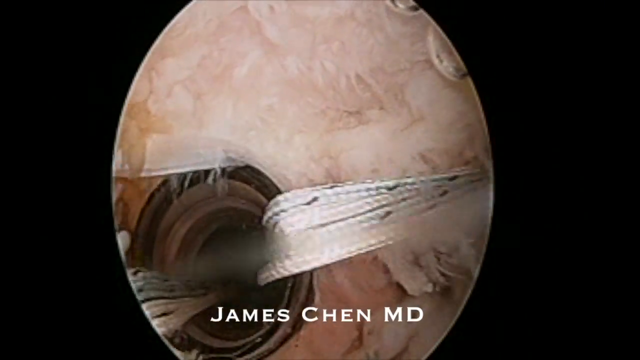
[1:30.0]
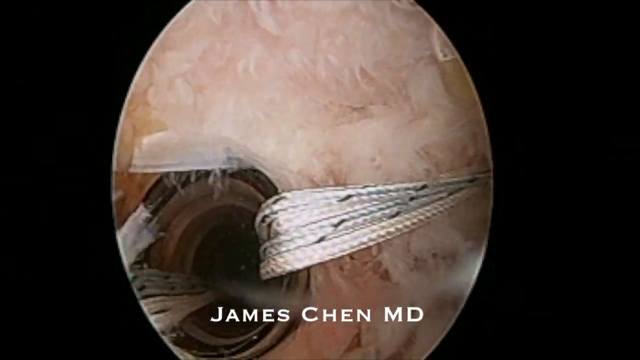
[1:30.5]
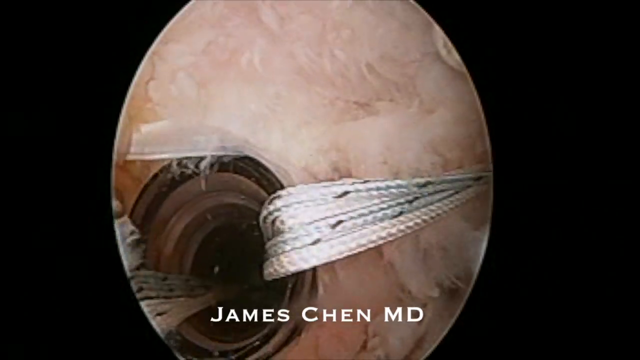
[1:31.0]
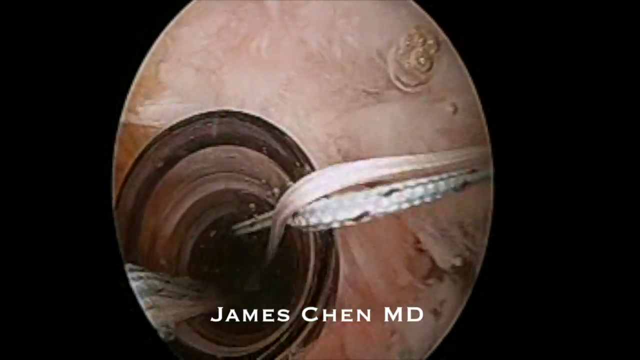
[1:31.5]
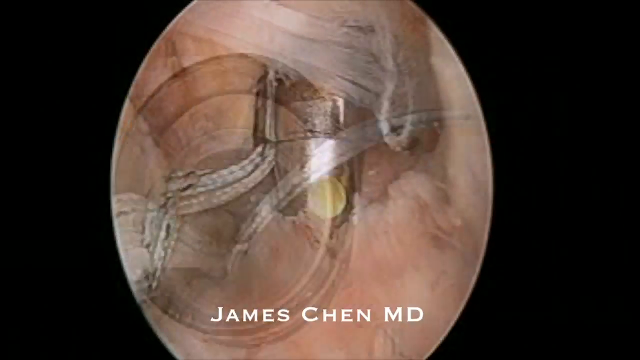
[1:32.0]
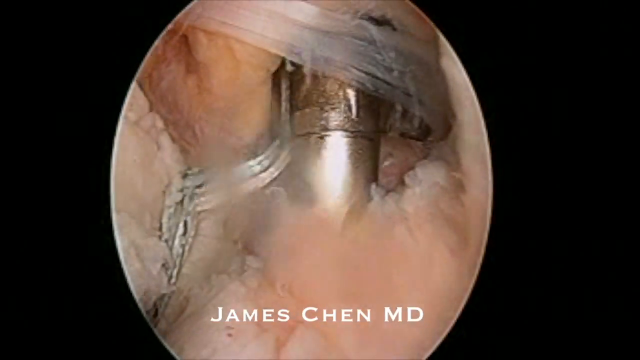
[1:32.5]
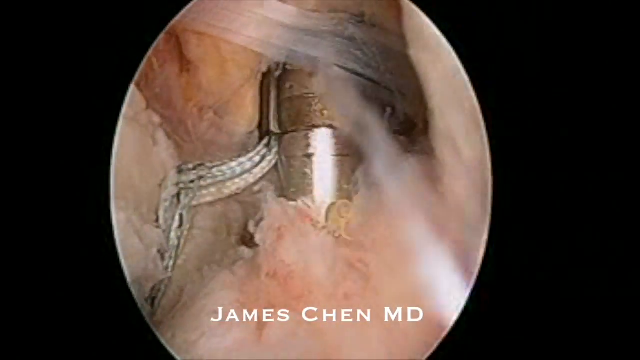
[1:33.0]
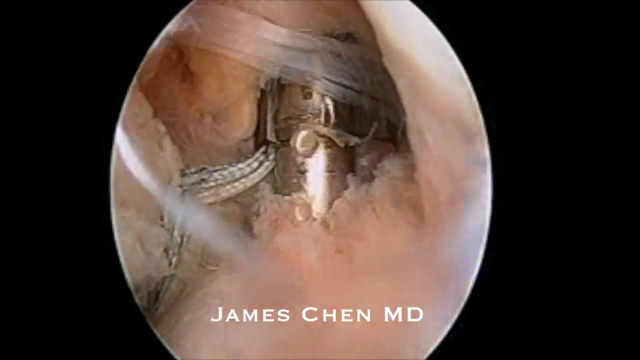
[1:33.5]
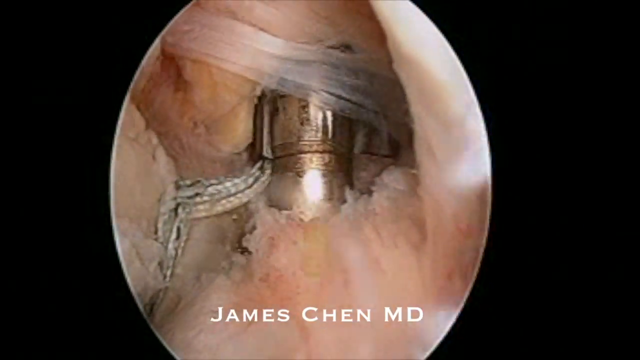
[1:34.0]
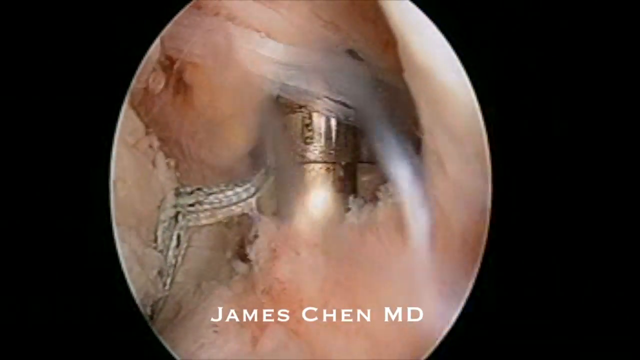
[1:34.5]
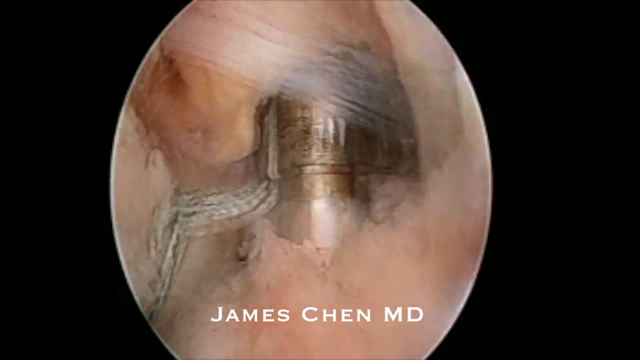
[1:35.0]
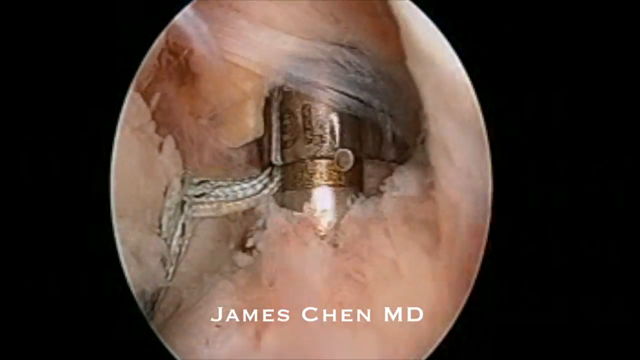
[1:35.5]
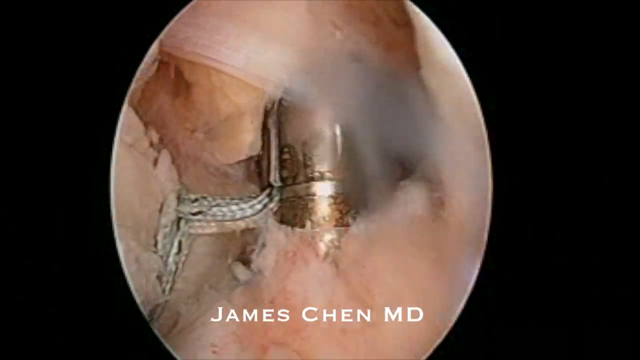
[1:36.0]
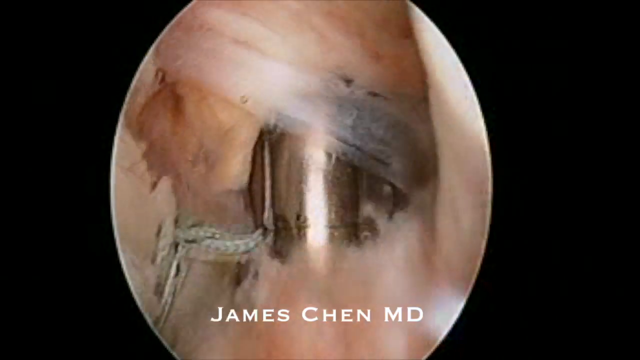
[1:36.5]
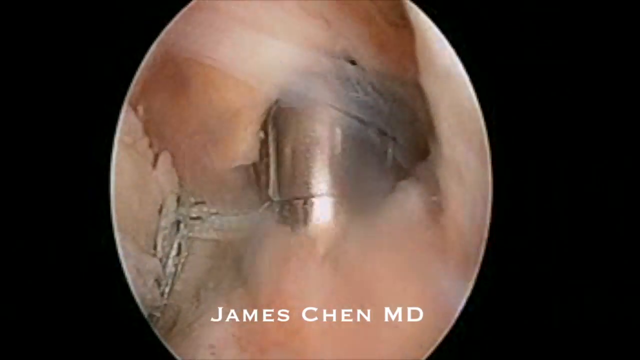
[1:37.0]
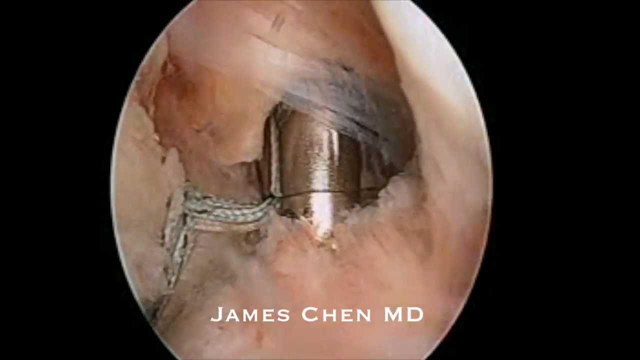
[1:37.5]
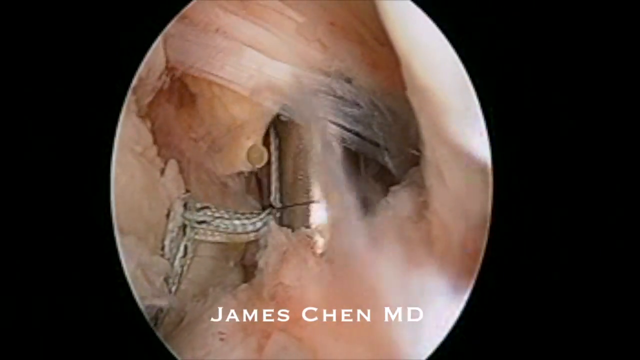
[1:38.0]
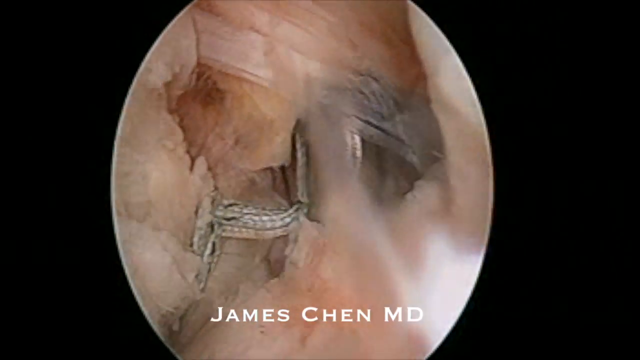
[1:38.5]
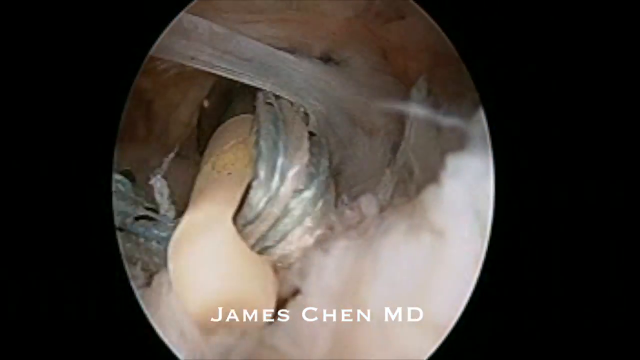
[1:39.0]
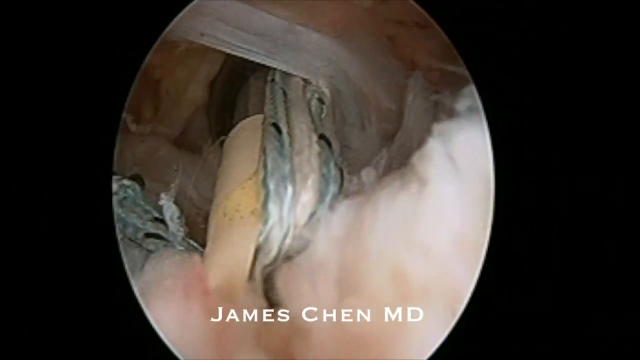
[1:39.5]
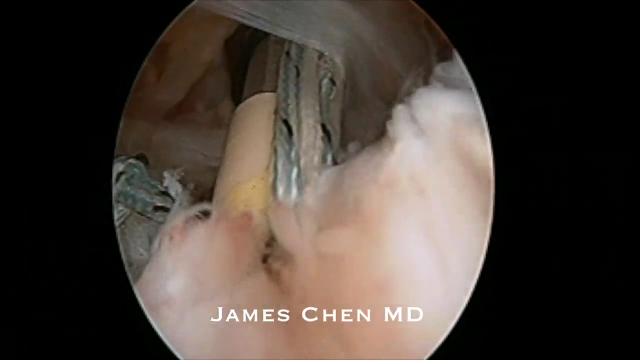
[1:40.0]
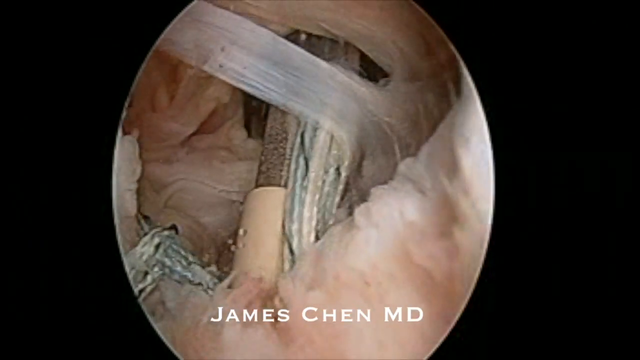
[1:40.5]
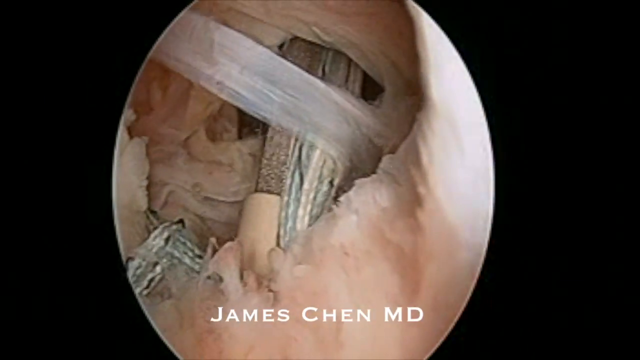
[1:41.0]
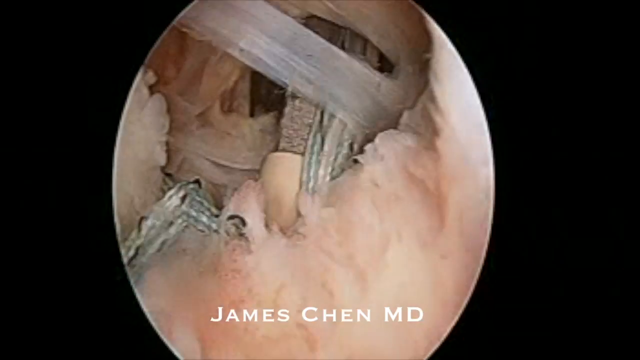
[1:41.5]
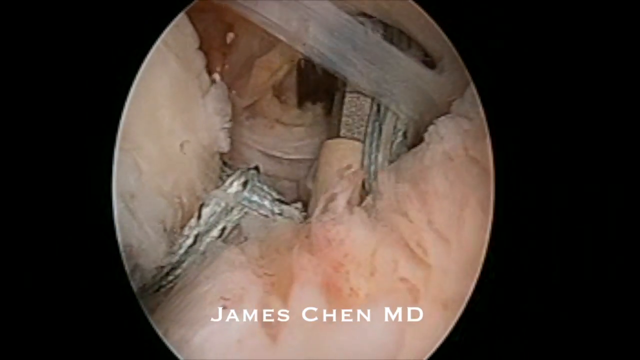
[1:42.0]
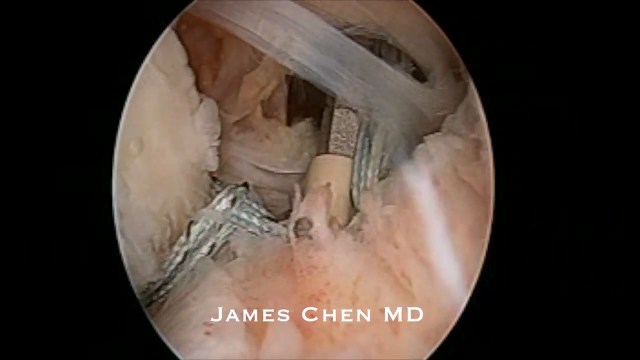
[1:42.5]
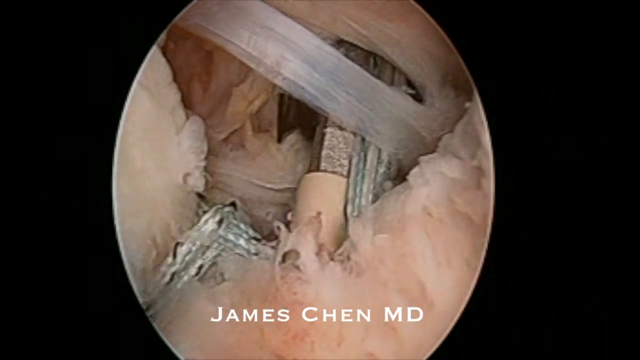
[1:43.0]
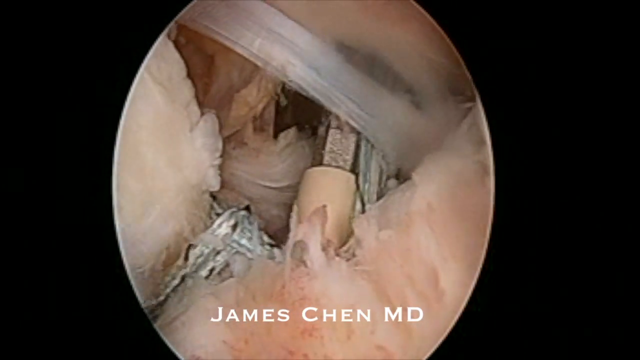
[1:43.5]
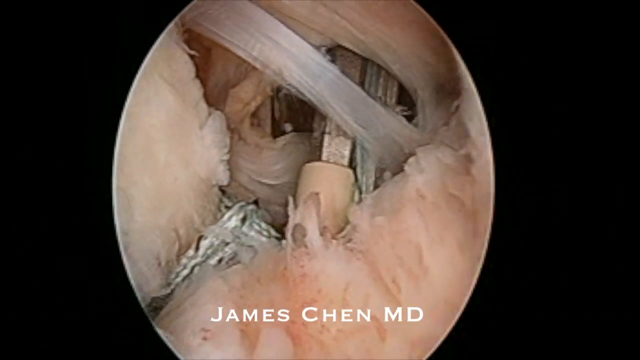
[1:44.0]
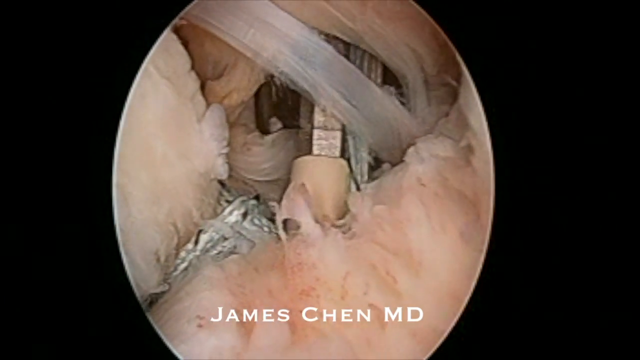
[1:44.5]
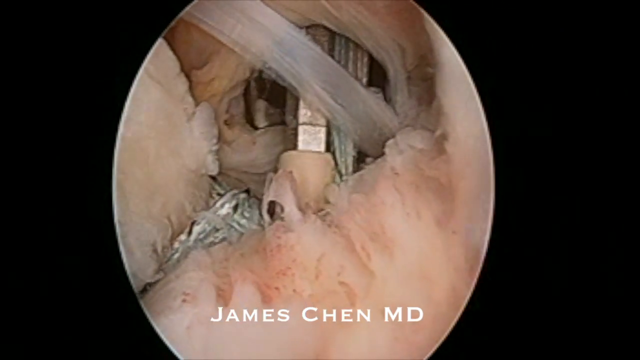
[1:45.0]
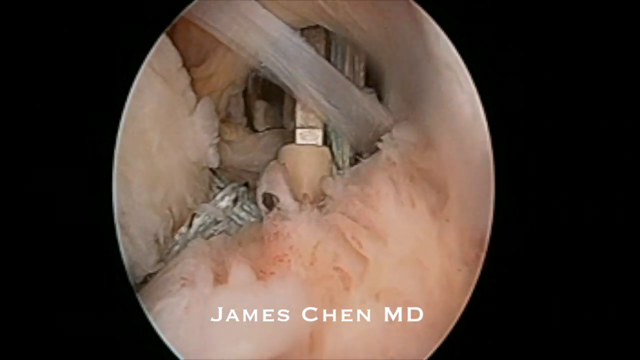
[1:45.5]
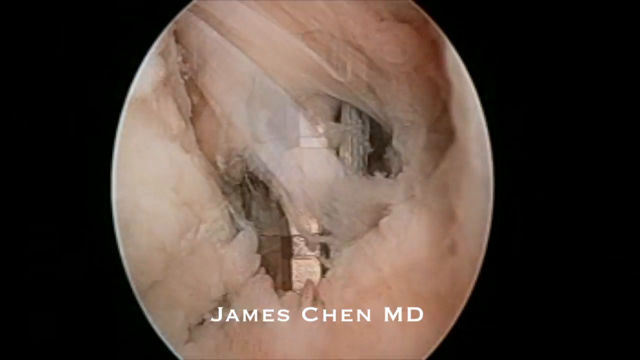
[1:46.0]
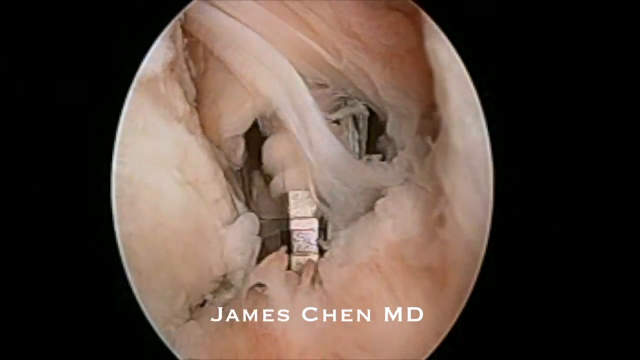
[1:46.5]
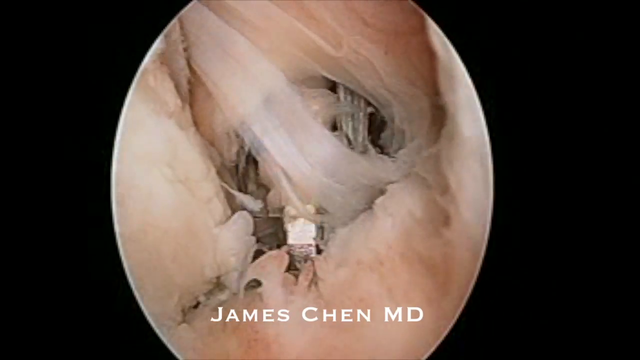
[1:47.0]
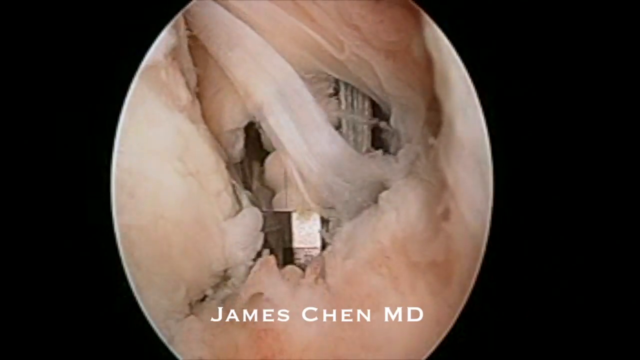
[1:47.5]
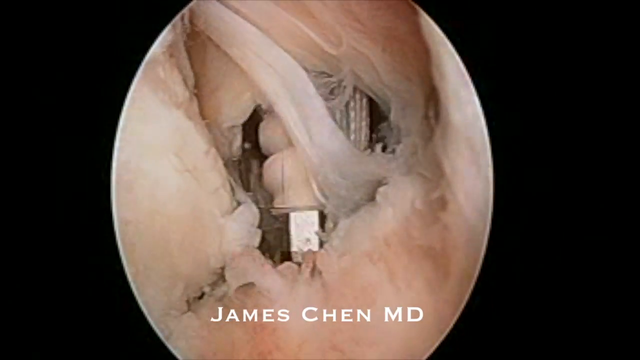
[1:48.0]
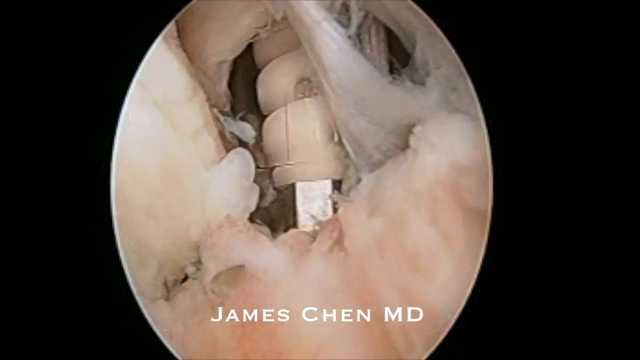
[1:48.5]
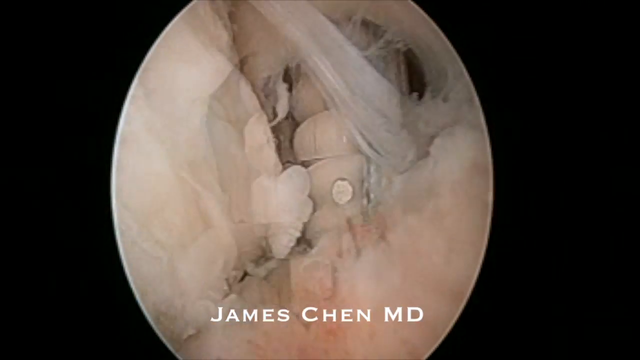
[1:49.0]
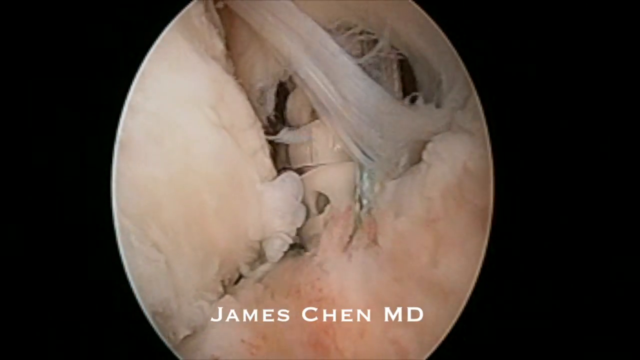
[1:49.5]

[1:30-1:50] The view flips to a top or aerial view of the metal cylinder object inside the body, with strands of rope being fed down into it. The image then shows something that appears to be drilling or working as it moves up and down on the screen. Something flashes in front of the camera; it looks like pieces are being cut and kicked up in front of it, making it difficult to tell exactly what is happening, possibly that tool working. The cylinder, with the rope in it, is then pushed lower and seems to be moved by the doctor to a specific area he is trying to get it into or block off. All the while, the name "James Chen MD" appears at the bottom of the screen.